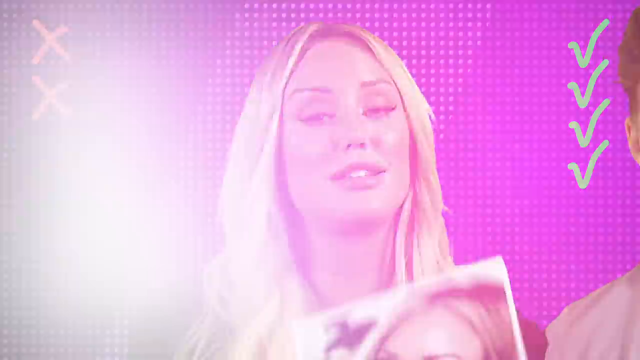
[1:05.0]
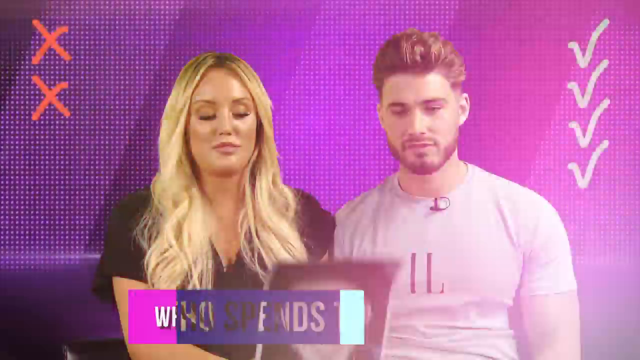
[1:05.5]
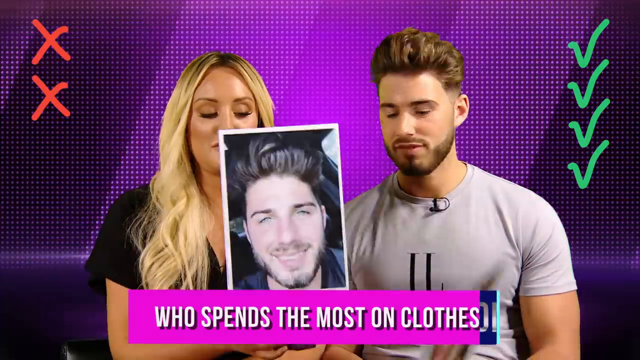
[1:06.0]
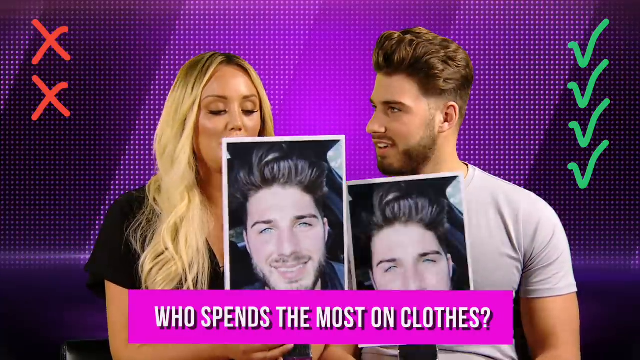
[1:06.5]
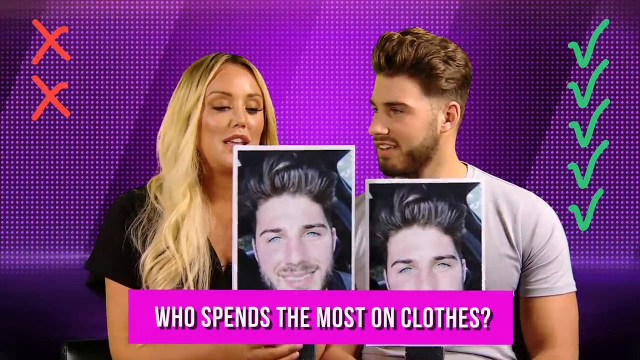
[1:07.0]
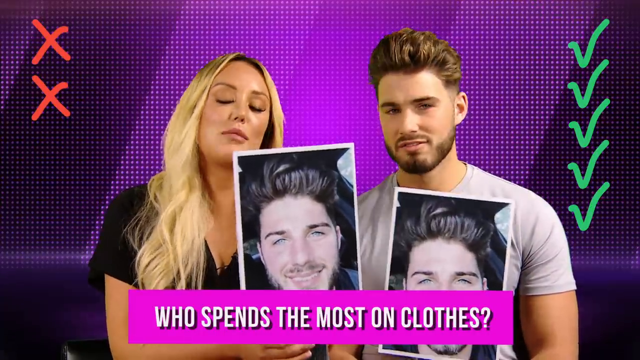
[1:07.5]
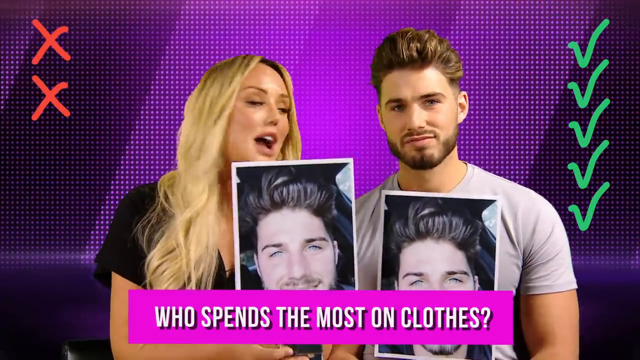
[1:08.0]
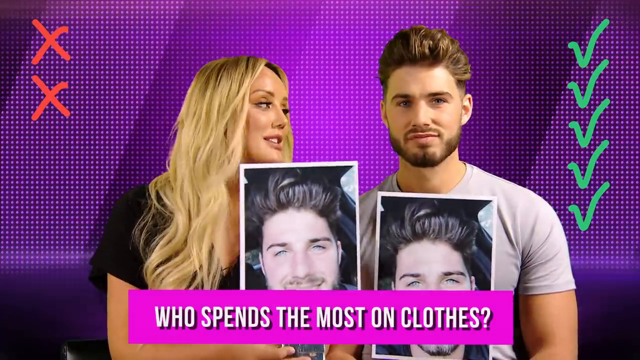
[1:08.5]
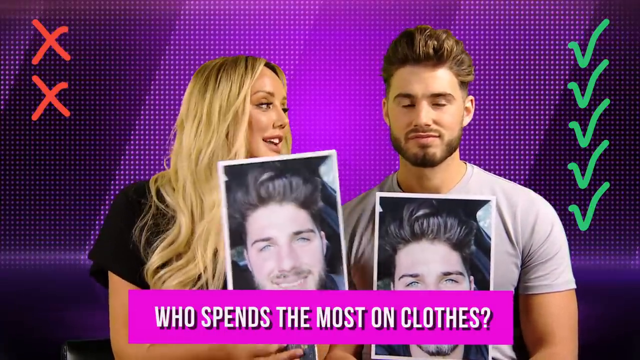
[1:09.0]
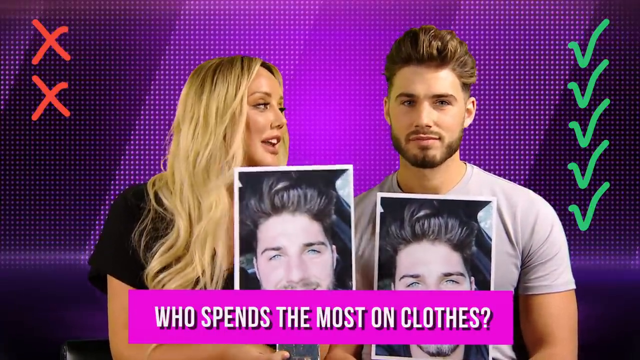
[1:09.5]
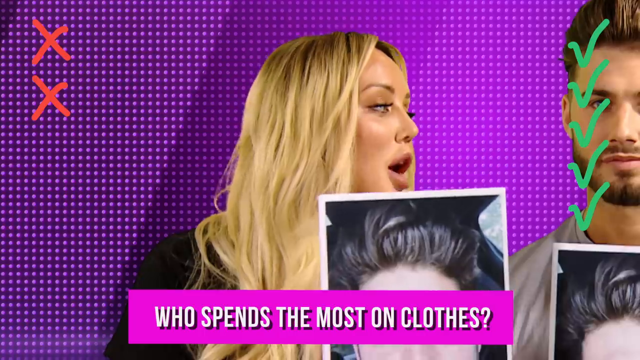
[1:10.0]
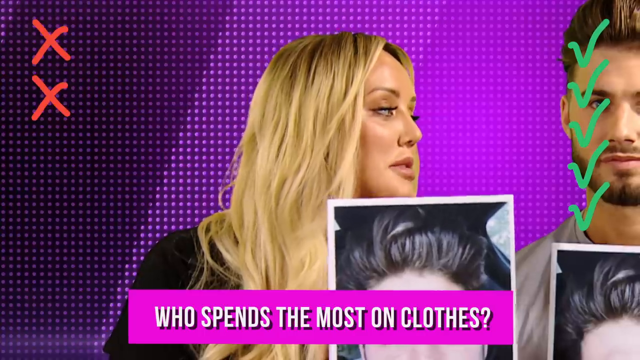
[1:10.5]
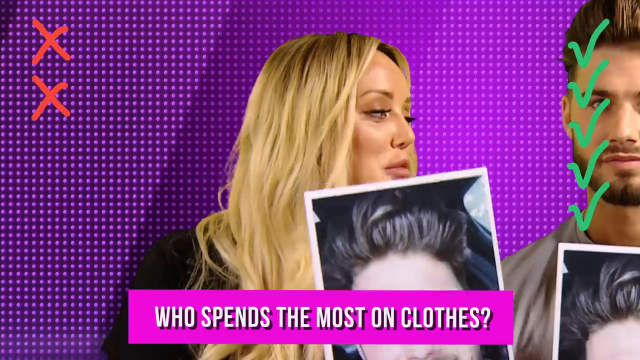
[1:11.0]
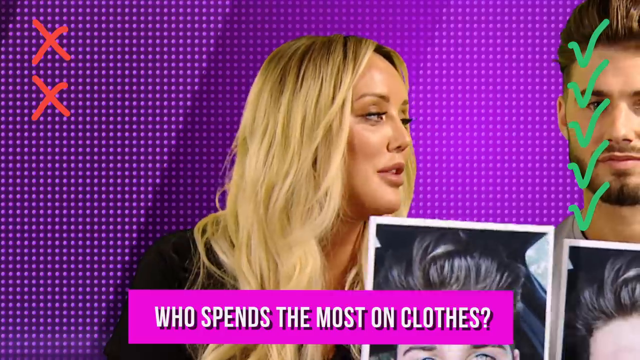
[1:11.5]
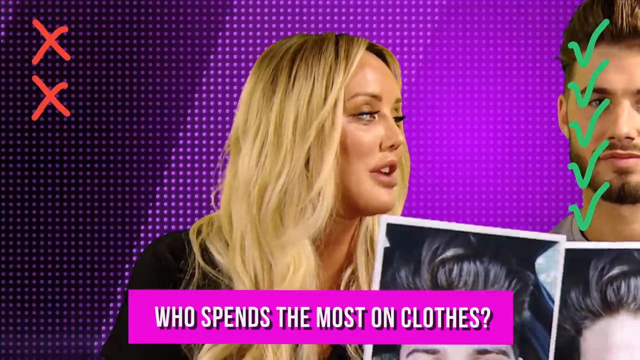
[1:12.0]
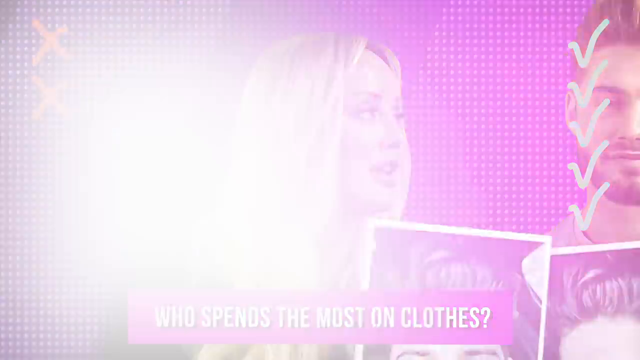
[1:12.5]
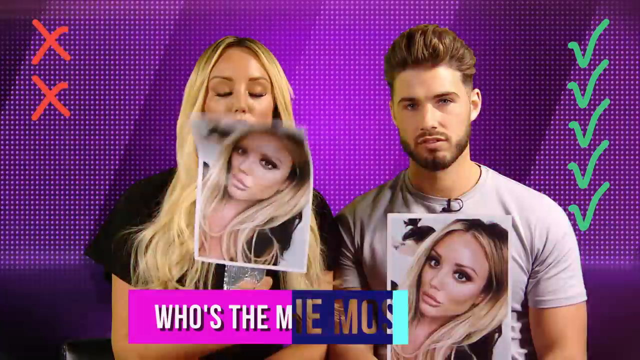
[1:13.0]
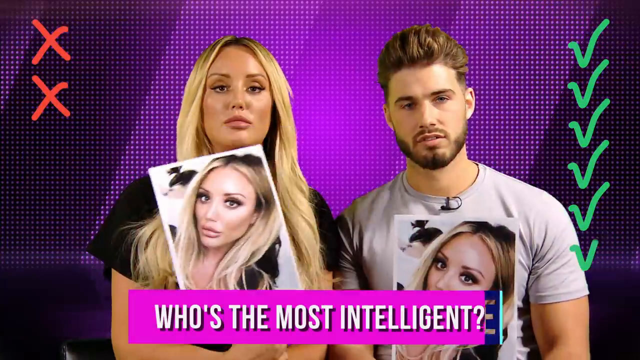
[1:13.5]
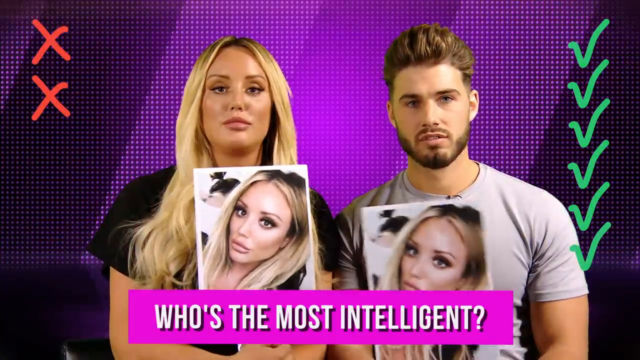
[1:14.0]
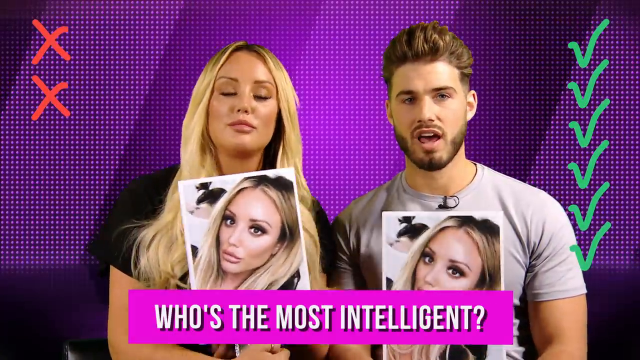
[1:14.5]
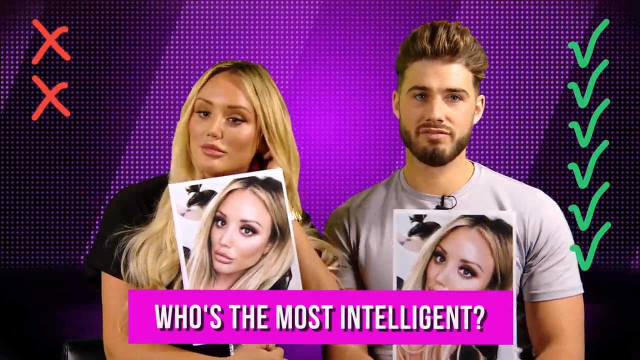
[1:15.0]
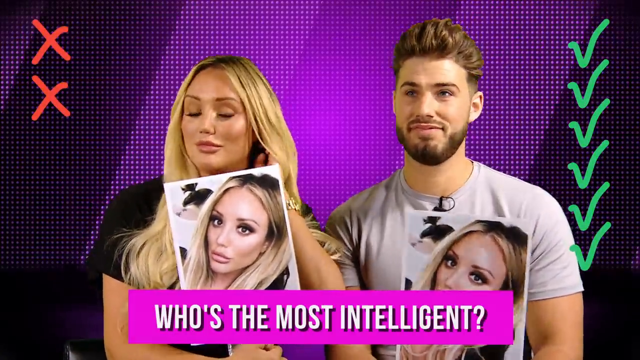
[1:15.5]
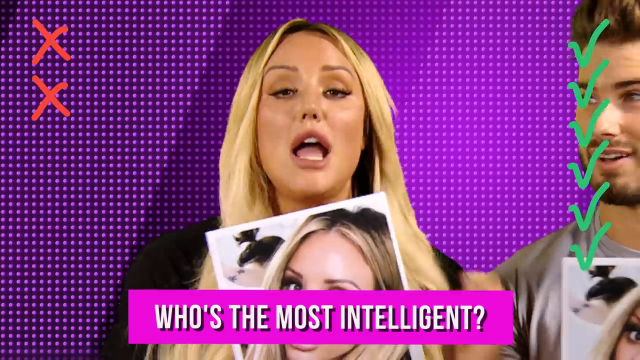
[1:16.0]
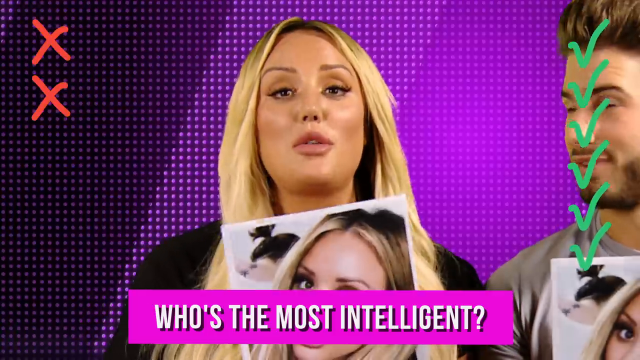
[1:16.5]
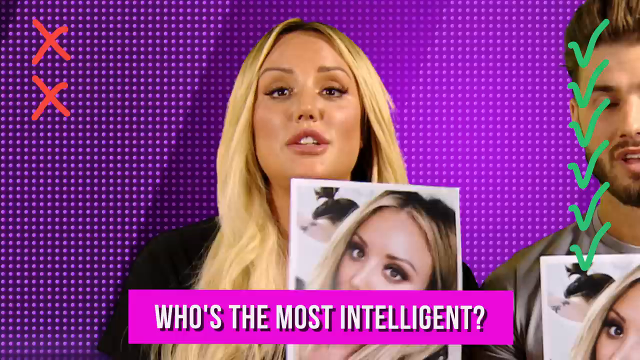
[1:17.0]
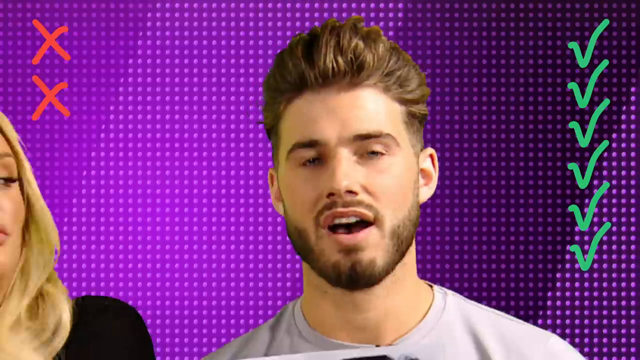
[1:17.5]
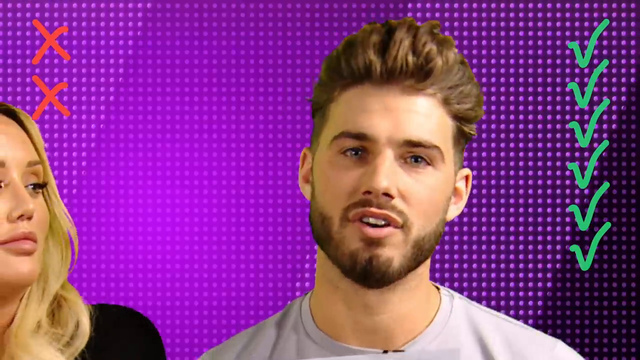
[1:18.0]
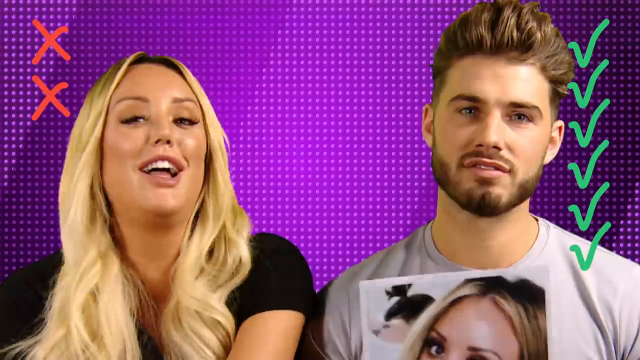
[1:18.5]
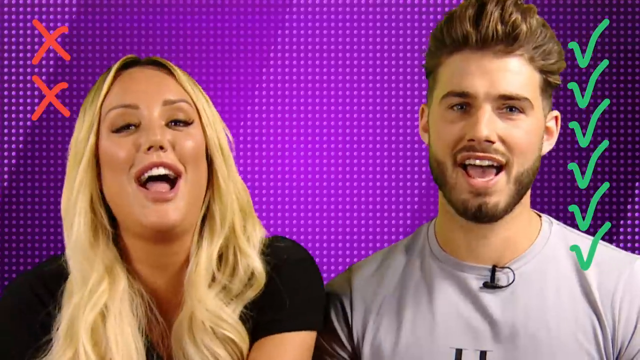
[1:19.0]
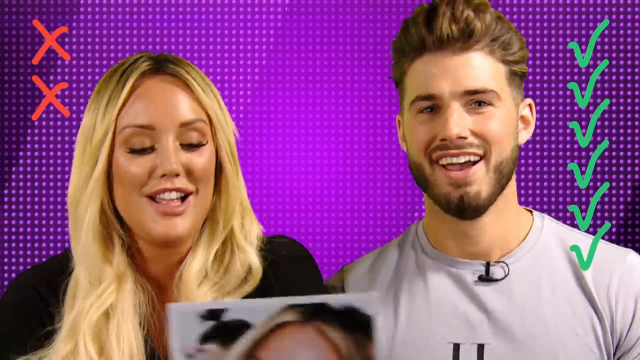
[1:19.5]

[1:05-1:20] For "who spends the most on clothes?" they both hold up a picture of him and seem to be in complete agreement. She turns her head, looks at him and says something, and he looks okay with whatever is being said. The next question is "who's the most intelligent?" and they both hold up a picture of her, both seeming completely okay with that answer. By the end the tally is two wrongs or disagreements and six agreements. They appear at ease with each other, laughing and talking.